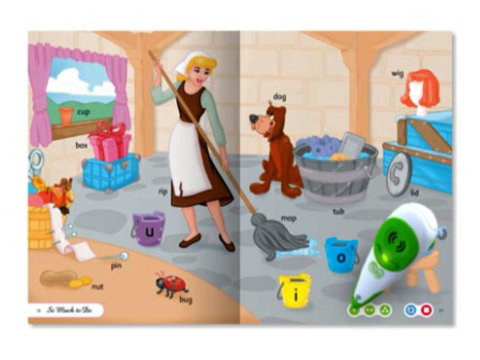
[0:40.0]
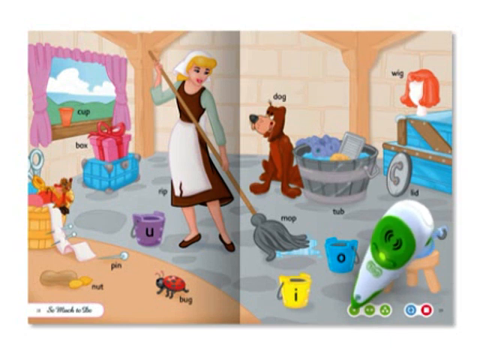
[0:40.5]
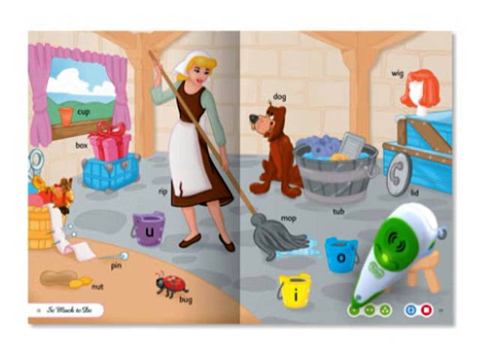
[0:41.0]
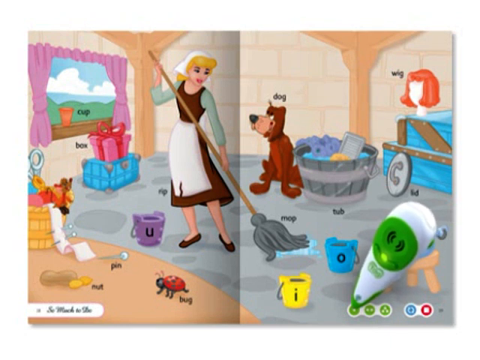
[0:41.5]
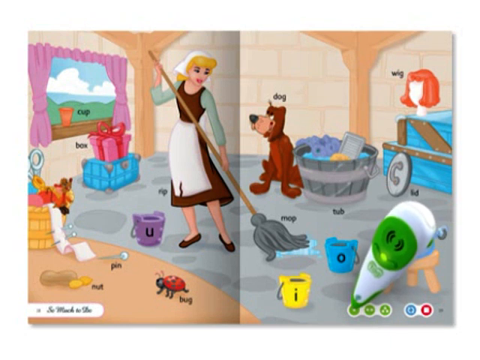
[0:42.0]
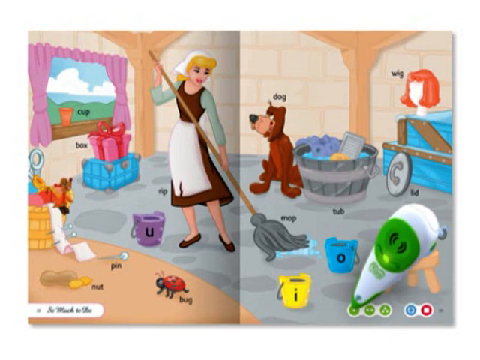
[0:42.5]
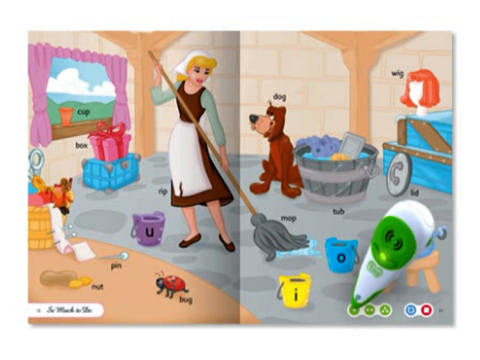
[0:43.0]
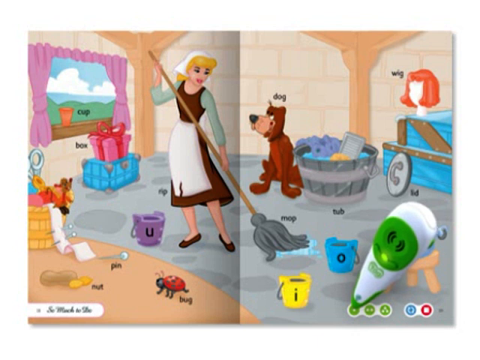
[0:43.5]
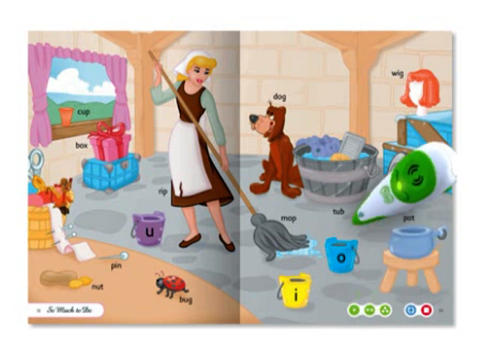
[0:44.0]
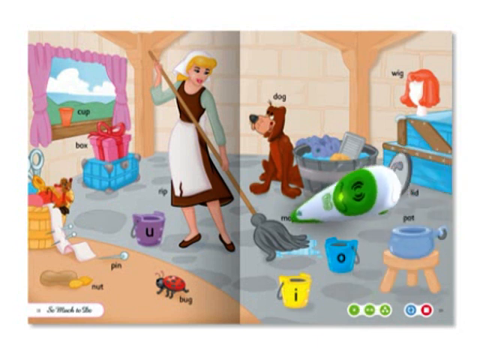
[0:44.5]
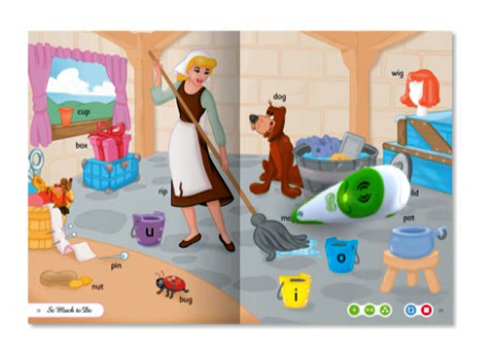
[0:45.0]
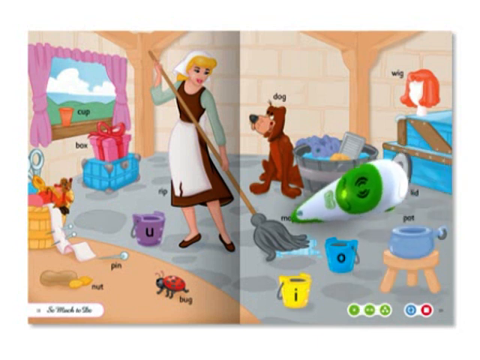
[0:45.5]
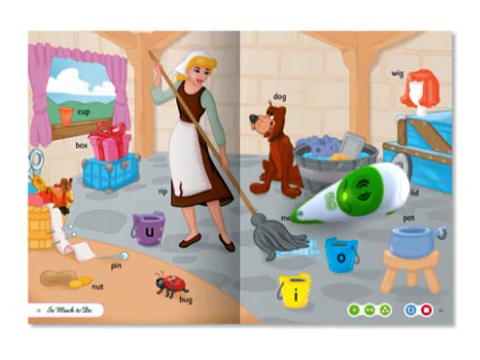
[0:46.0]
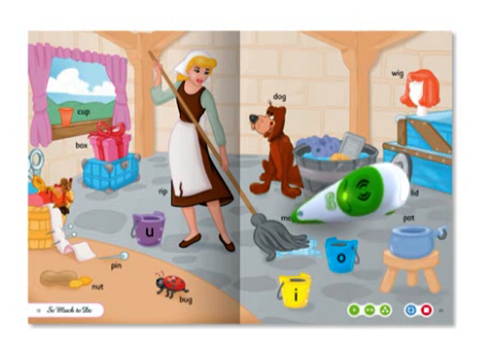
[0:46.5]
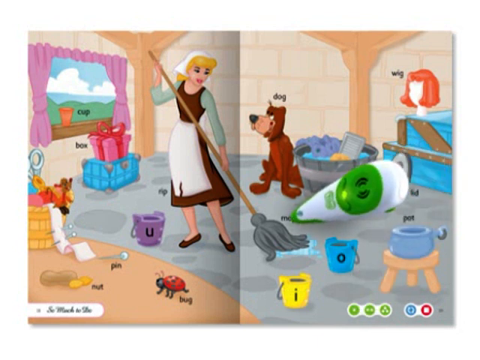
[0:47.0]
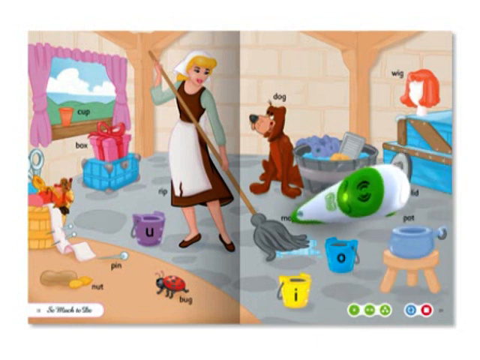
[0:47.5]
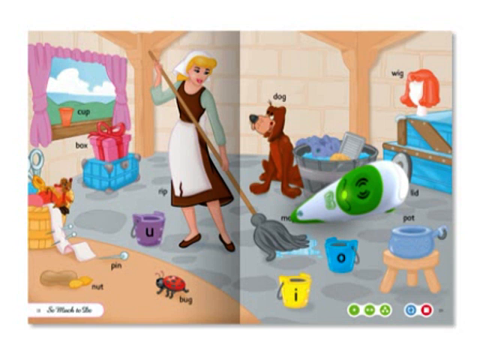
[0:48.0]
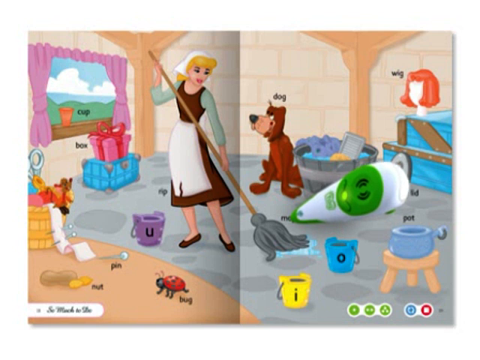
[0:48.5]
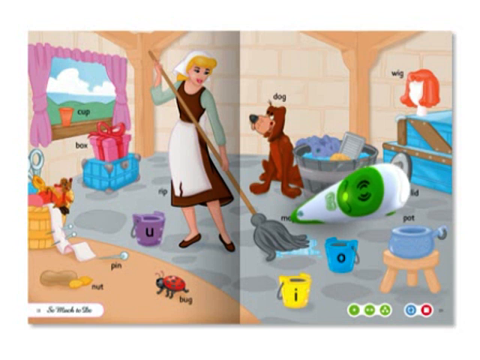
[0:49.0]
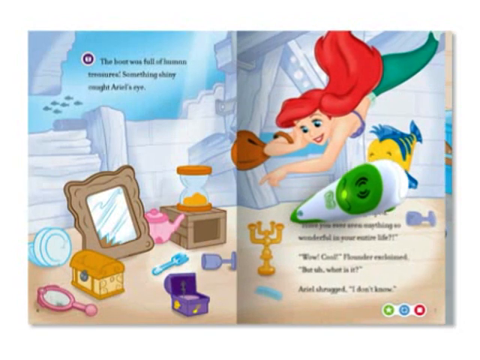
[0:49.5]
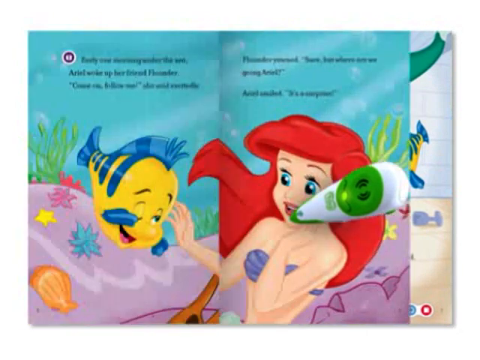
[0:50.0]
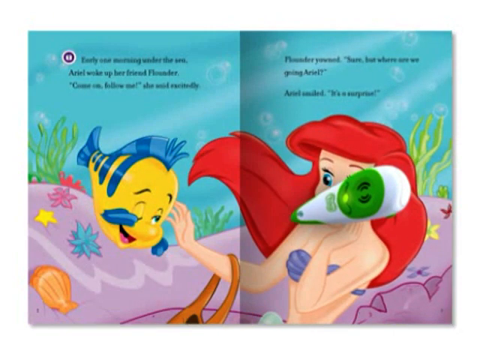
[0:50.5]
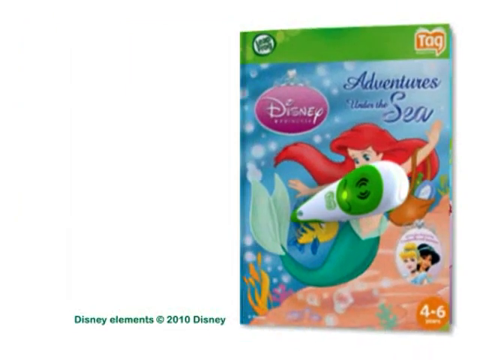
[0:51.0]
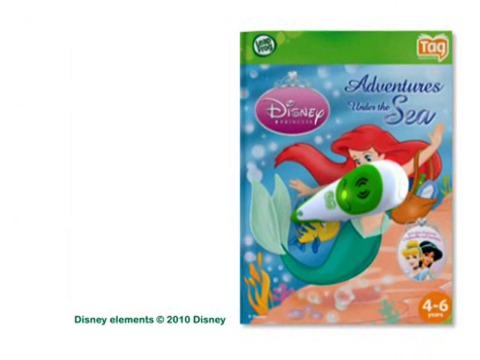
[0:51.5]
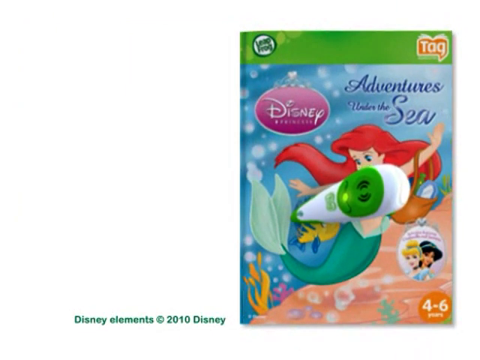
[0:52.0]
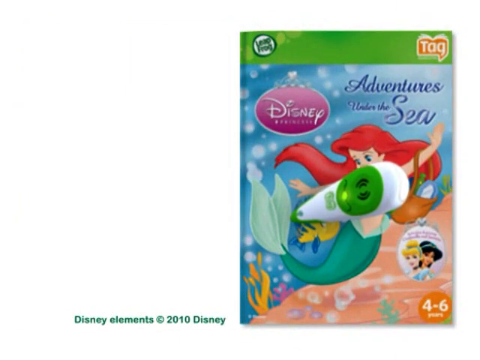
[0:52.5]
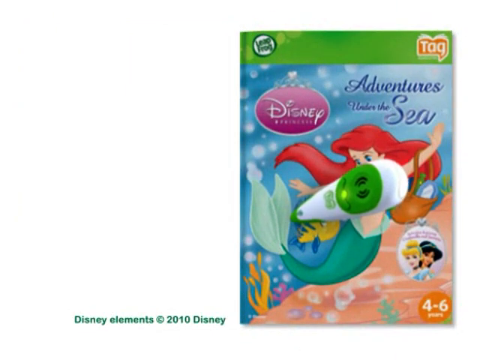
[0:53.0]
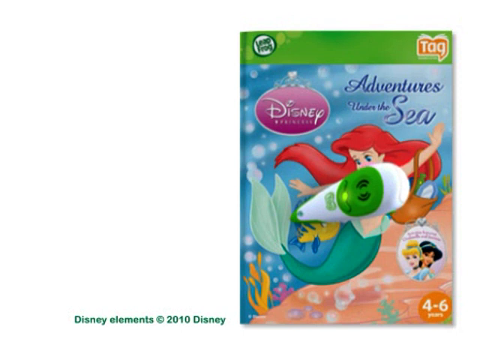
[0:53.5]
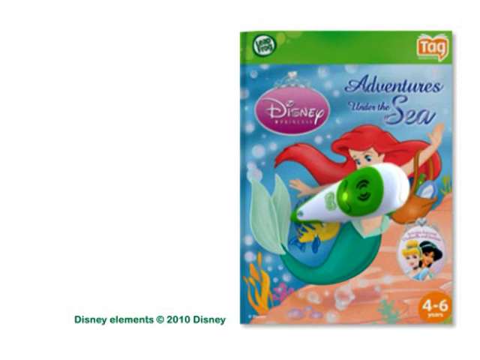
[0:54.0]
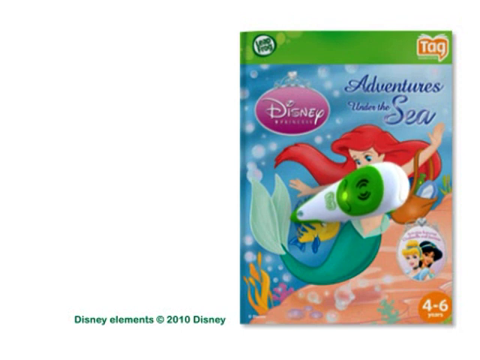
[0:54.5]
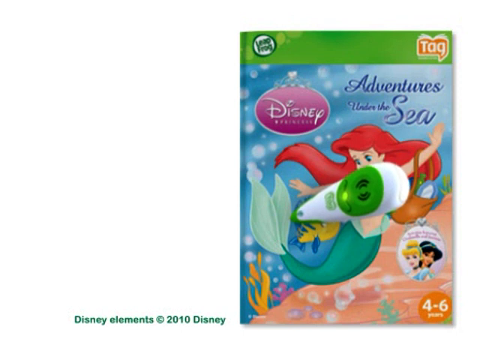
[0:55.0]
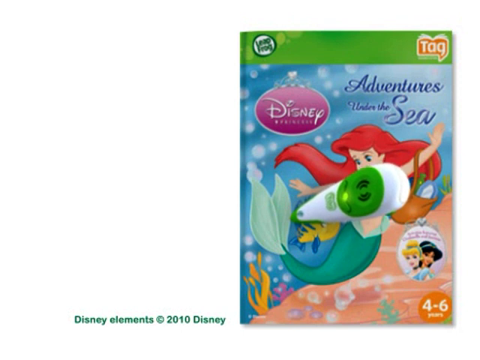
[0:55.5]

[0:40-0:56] The device presses on different things on the page. A lady in relatively poor clothes appears, probably in a medieval setting, wearing a cloth over her blonde hair; she might be a cleaning lady. Many items are on the page, each named in black letters next to or on top of it, such as "bag", "dough", "cup" and "box". There are also buckets with letters on them that the machine can press. The booklet then slowly closes, showing the hard outer cover, which reads "Disney Princesses Adventures Under the Sea" and has the mermaid in the picture. In the lower right corner it says "four to six years old recommended". Above that are two more princesses: one is blonde, in a very stylish dress with her hair up in a bun, and the other, probably of Asian origin, has black hair with very glamorous decorations in it.